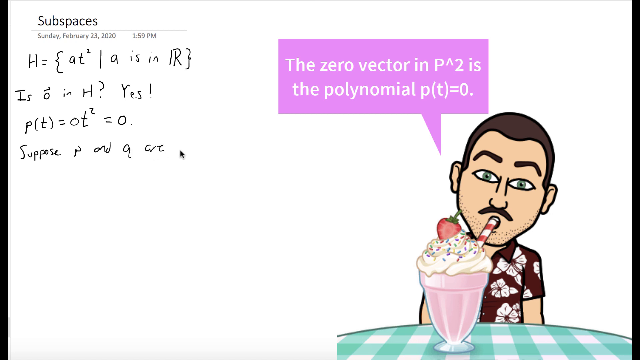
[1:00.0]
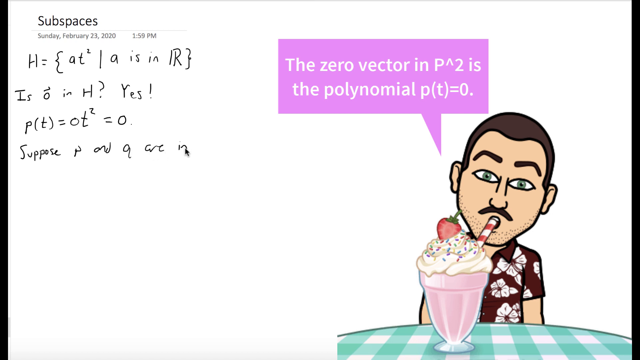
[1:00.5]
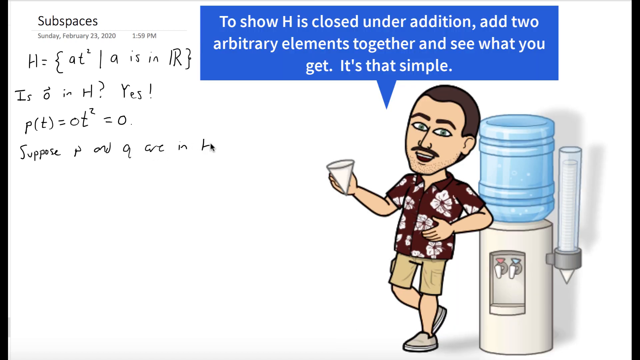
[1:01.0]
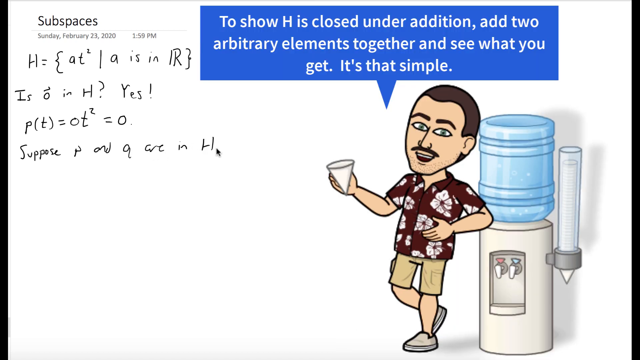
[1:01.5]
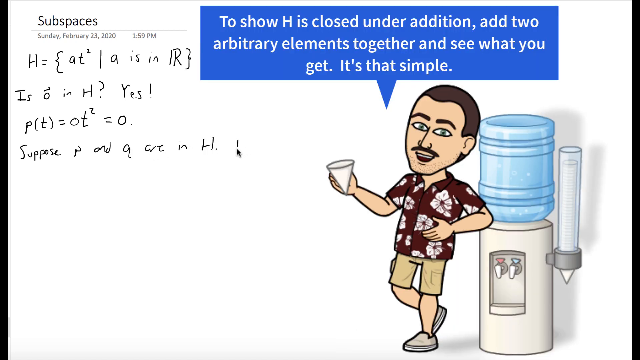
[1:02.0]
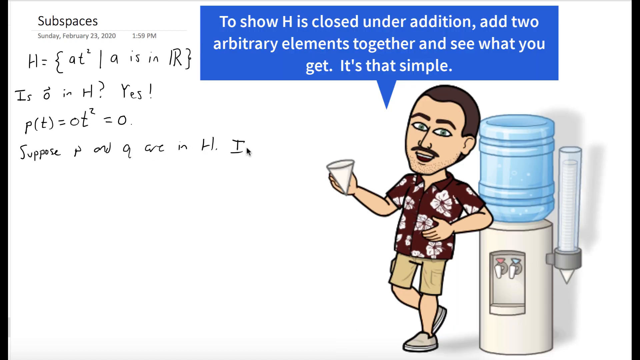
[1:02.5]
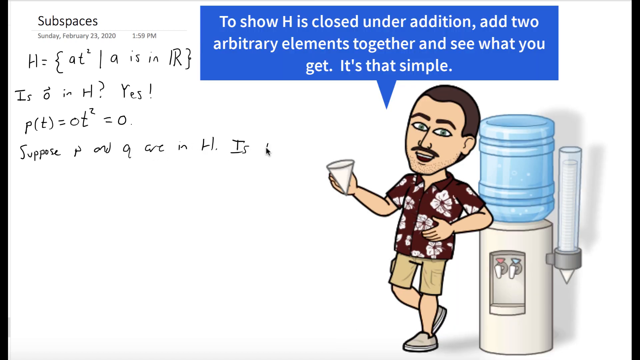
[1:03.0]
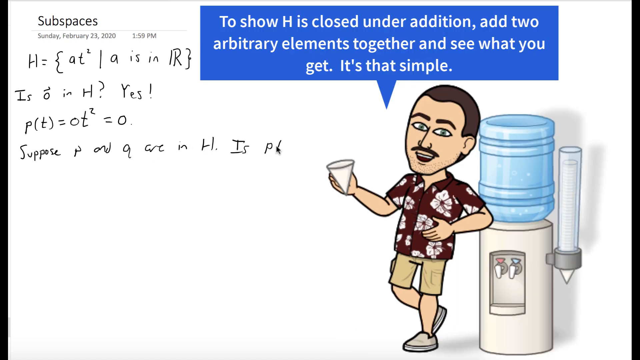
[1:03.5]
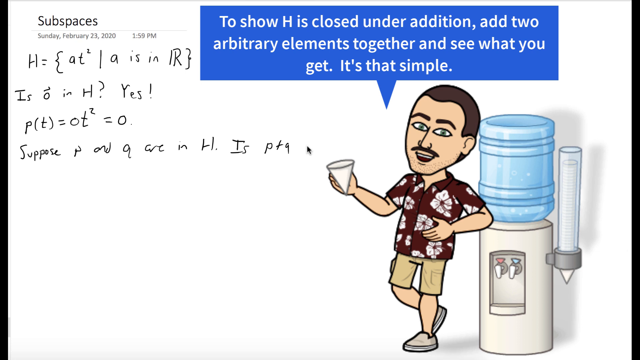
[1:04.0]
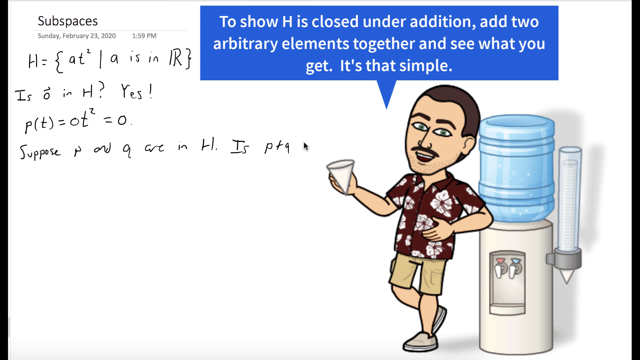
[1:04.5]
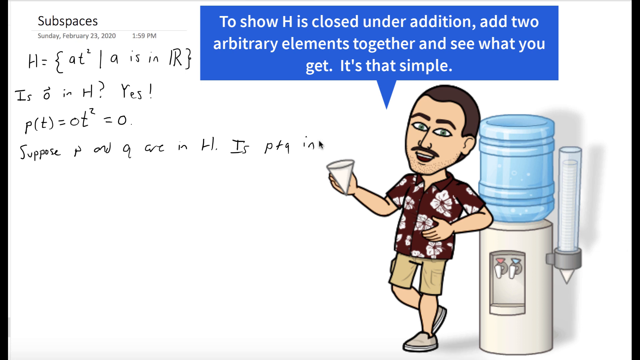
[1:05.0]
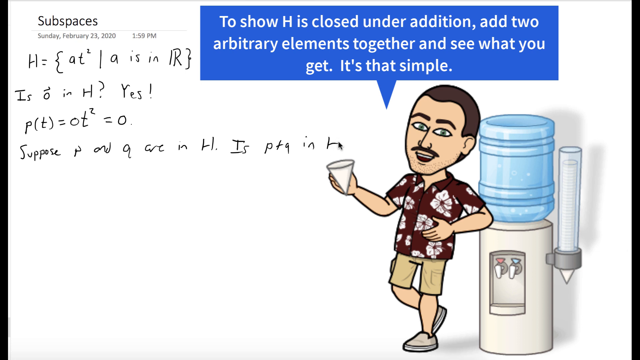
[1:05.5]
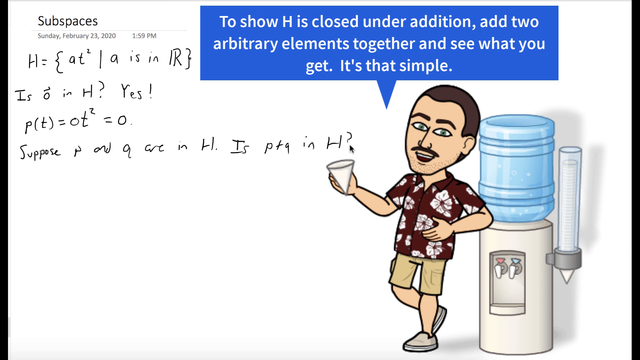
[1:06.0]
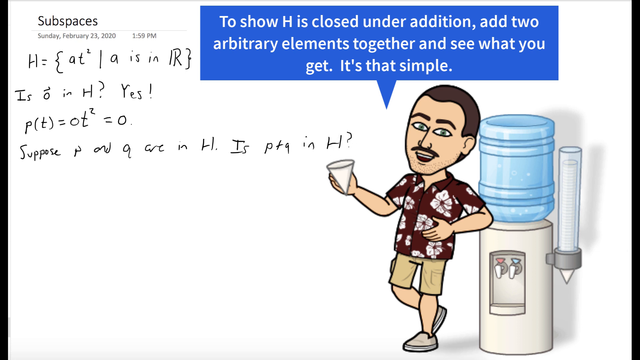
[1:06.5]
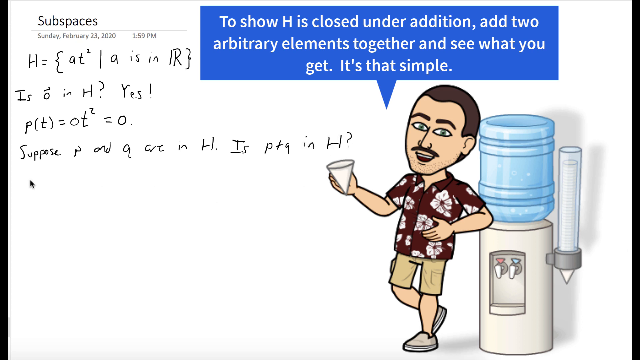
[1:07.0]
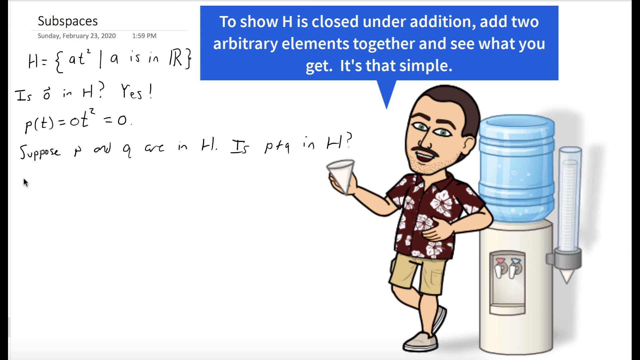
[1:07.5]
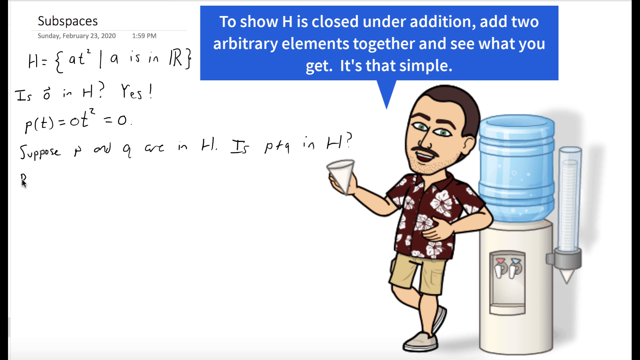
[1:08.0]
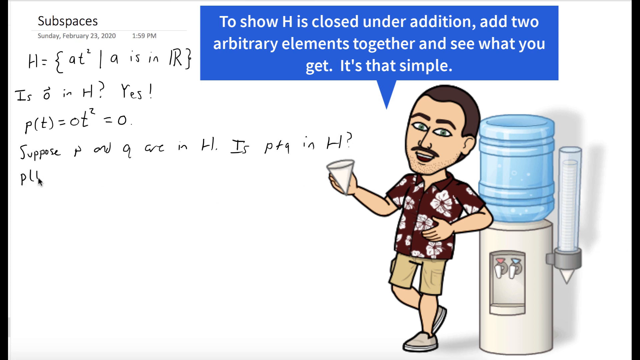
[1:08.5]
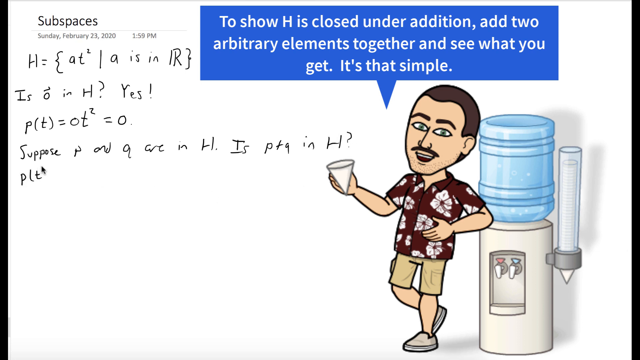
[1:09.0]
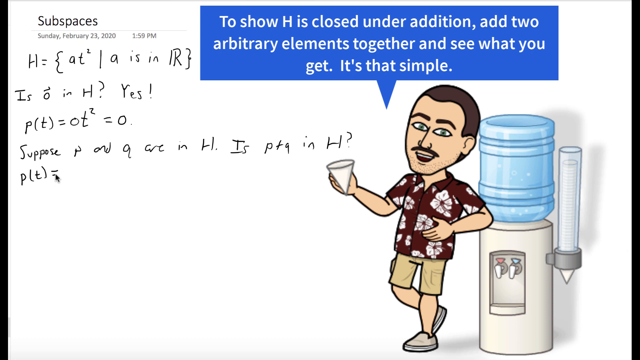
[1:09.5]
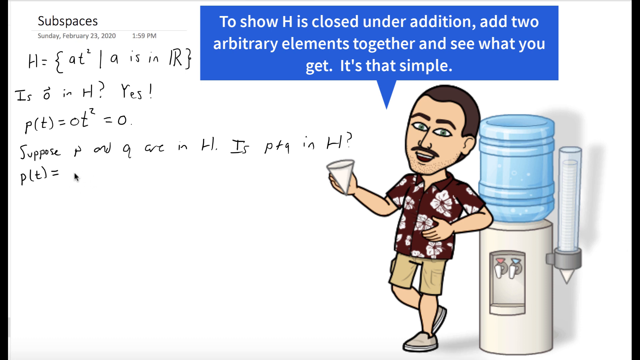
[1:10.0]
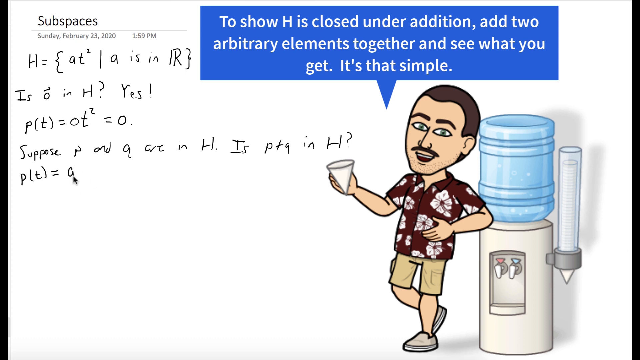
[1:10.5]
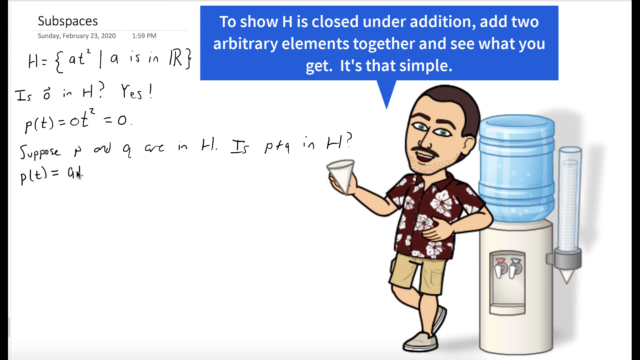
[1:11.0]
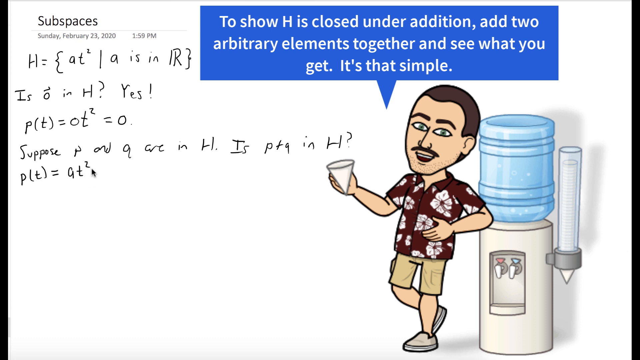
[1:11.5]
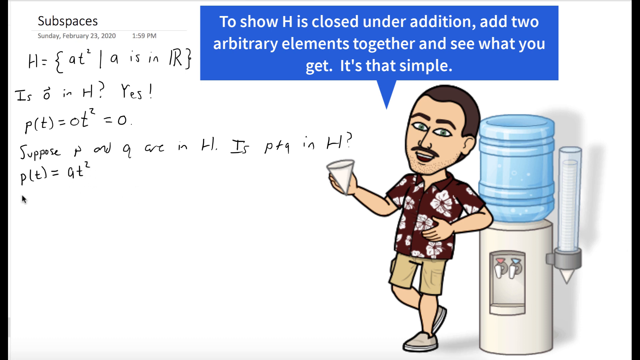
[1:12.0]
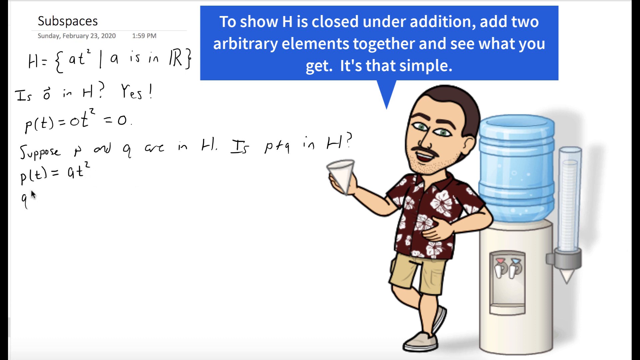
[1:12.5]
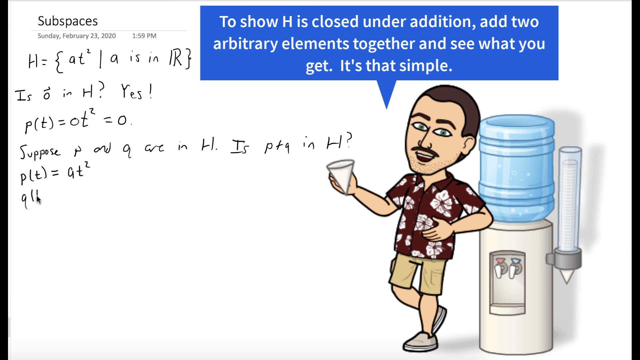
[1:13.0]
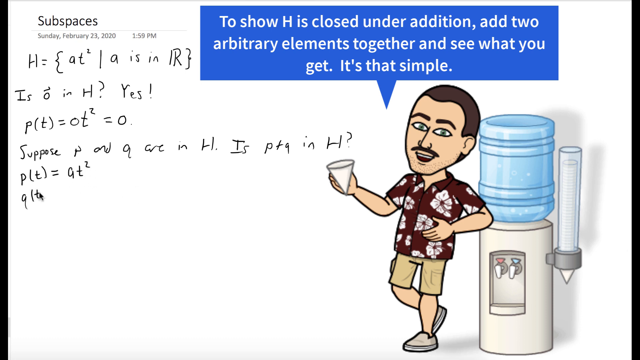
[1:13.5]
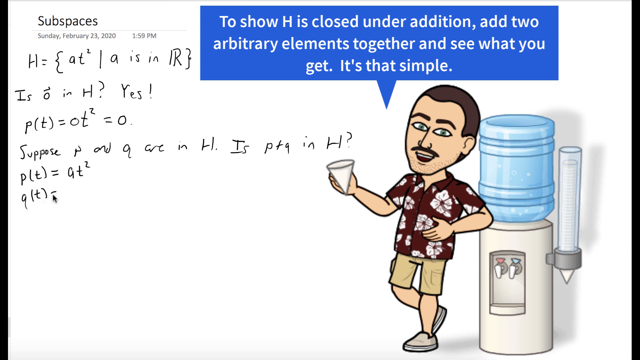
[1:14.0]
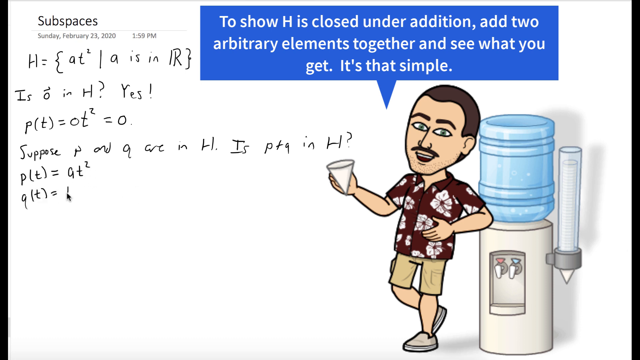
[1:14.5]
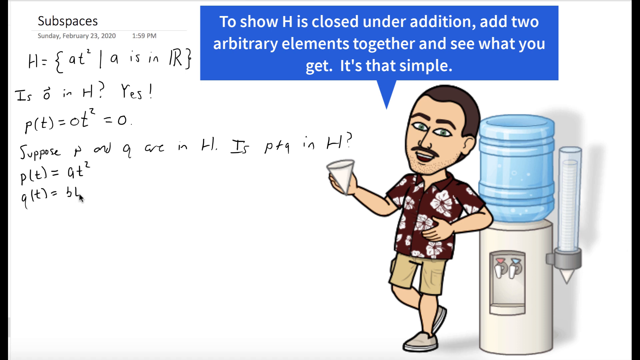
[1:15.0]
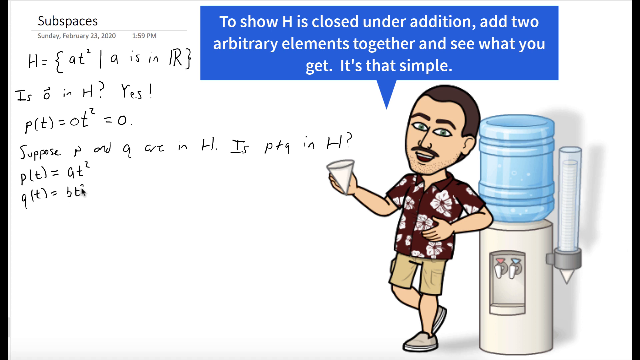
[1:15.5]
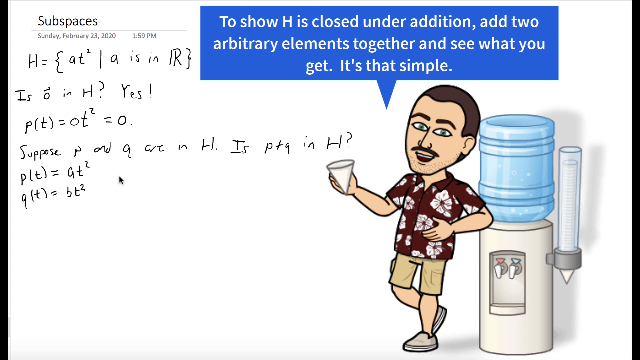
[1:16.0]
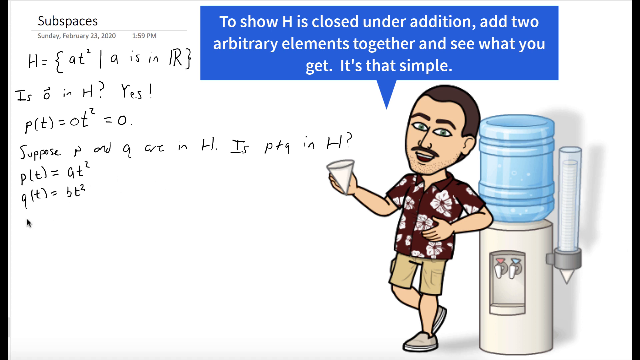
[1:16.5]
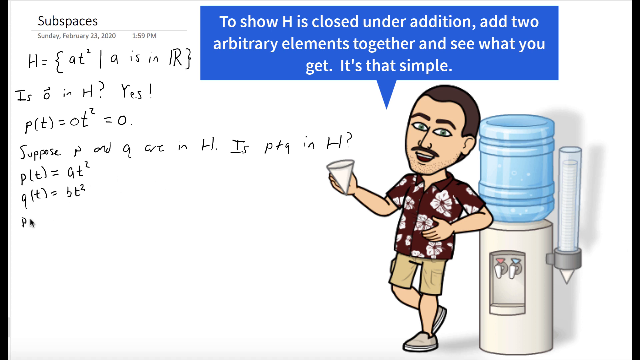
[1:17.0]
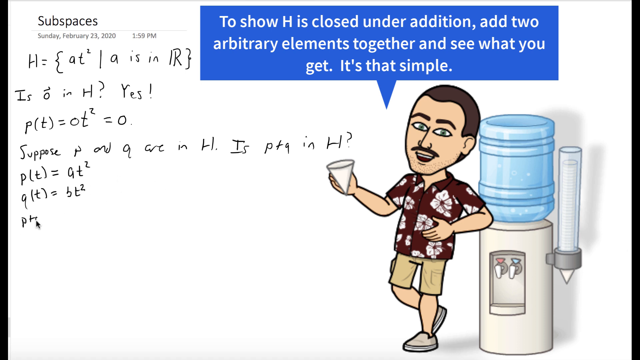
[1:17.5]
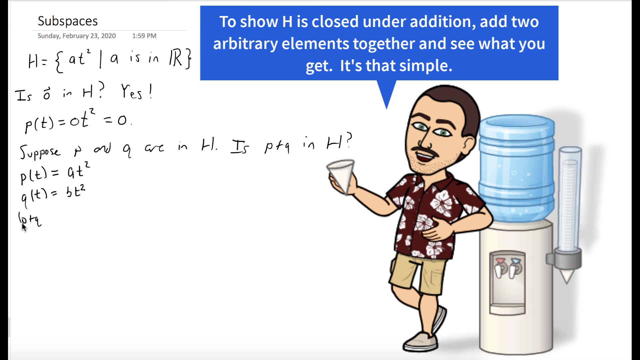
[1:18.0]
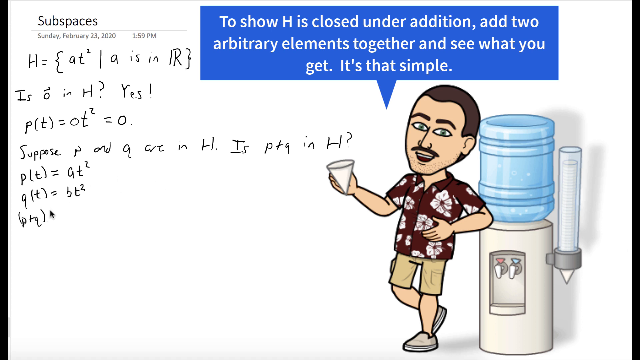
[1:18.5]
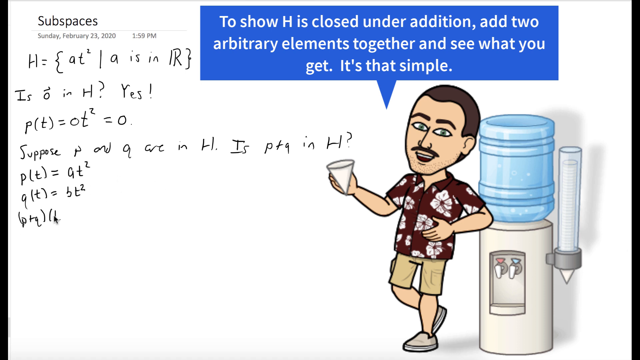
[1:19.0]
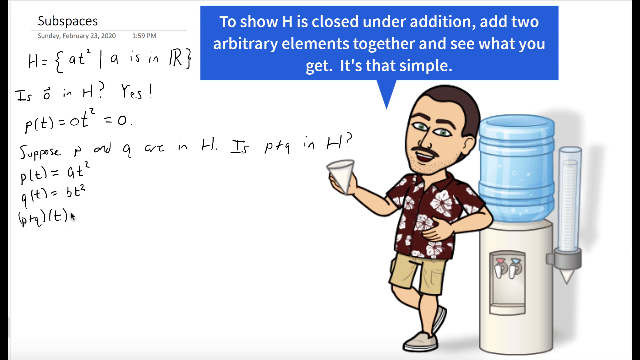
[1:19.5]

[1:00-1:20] The cartoon man has changed: he now leans against a water dispenser with little triangular paper cups and holds one of the white paper cups in his hand. A blue chat box above his head reads "to show H is closed under addition add two arbitrary elements together and see what you get It's that simple." On the left-hand side, the equations continue to be jotted down in black with the cursor as the writing utensil. The cartoon man wears a burgundy shirt with white flowers and has brown hair. The water dispenser is blue with a white bottom. He has a casual look, smiles with his eyes open, and has his mustache and some stubble. The shot ends with a long equation being finished on the left-hand side.